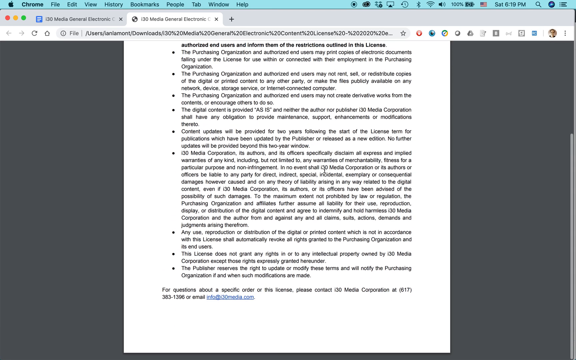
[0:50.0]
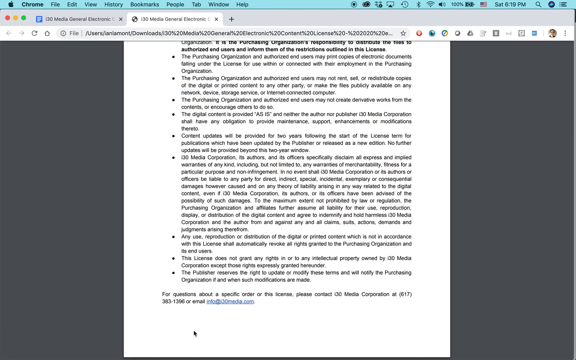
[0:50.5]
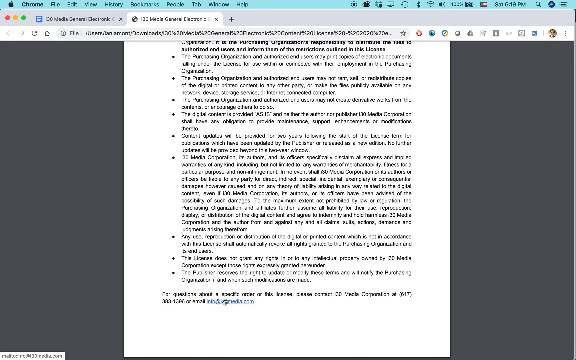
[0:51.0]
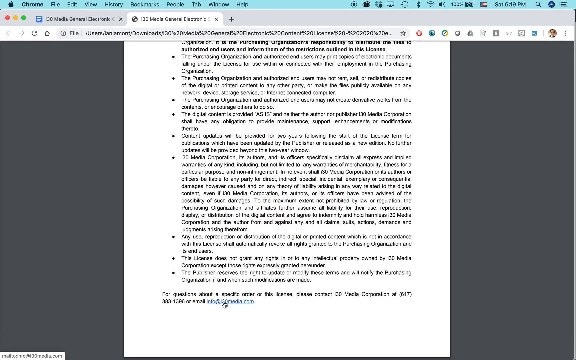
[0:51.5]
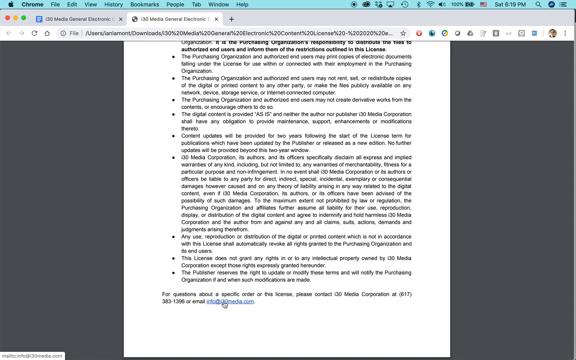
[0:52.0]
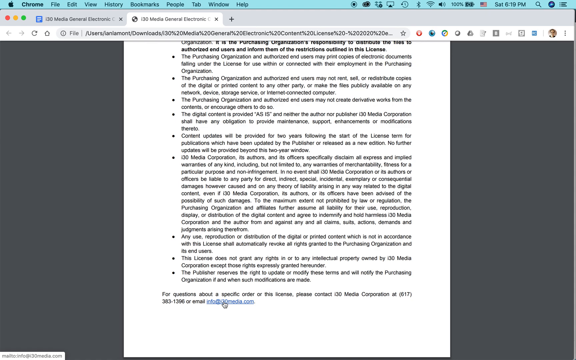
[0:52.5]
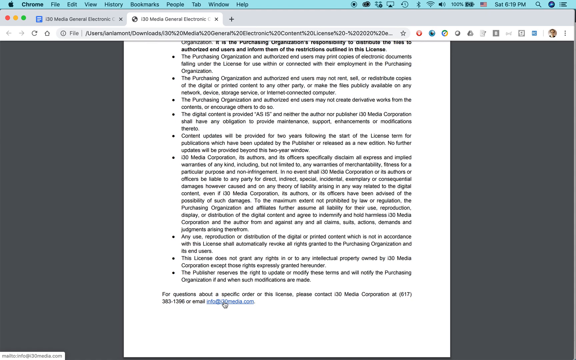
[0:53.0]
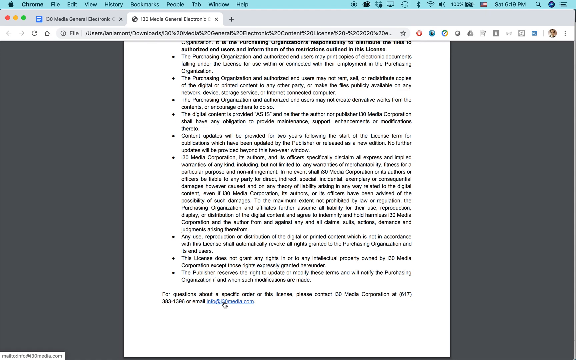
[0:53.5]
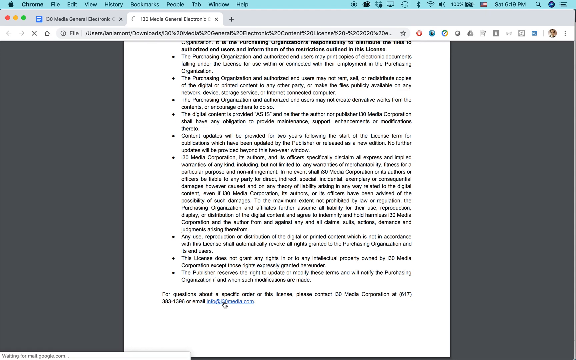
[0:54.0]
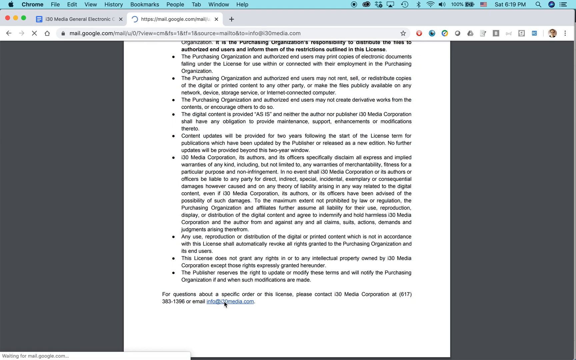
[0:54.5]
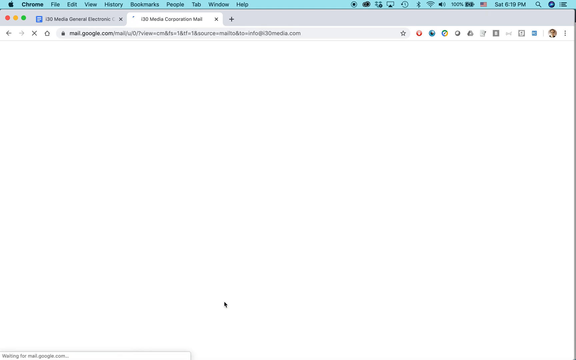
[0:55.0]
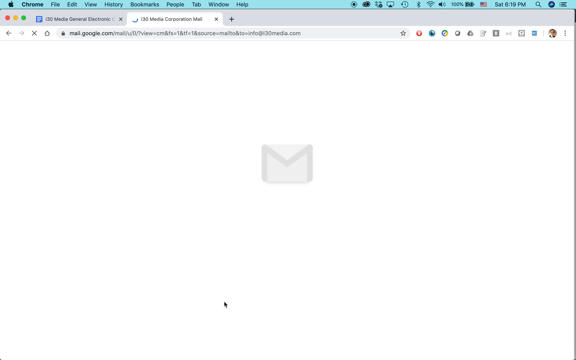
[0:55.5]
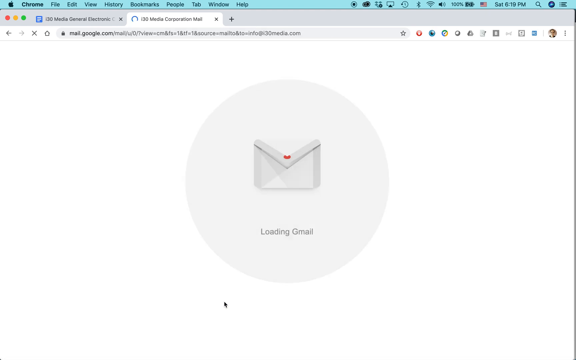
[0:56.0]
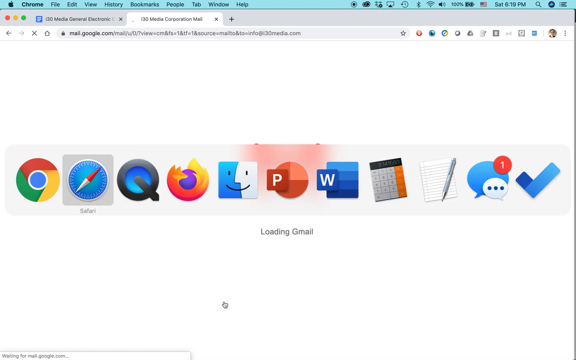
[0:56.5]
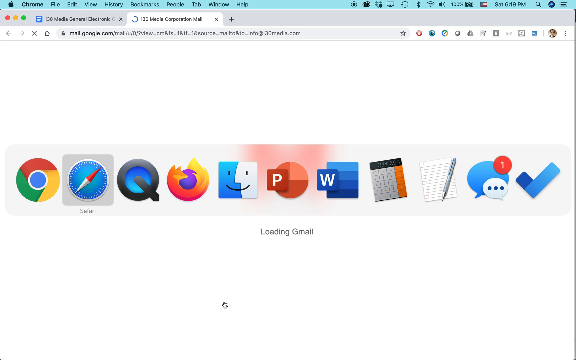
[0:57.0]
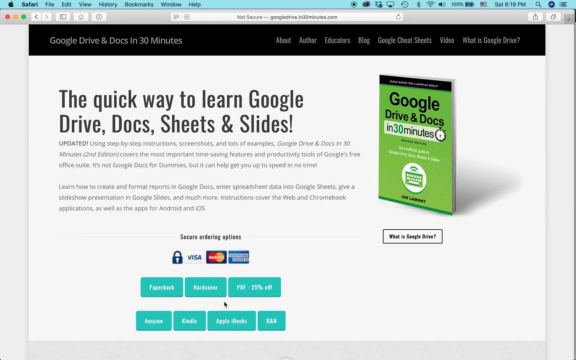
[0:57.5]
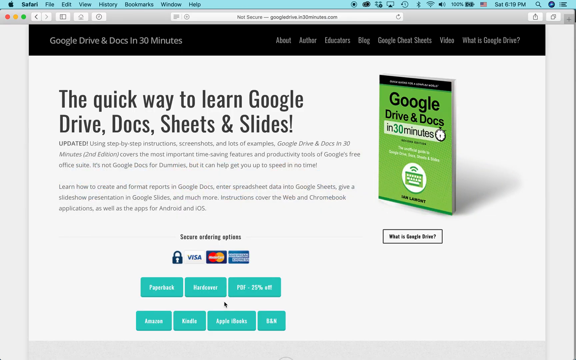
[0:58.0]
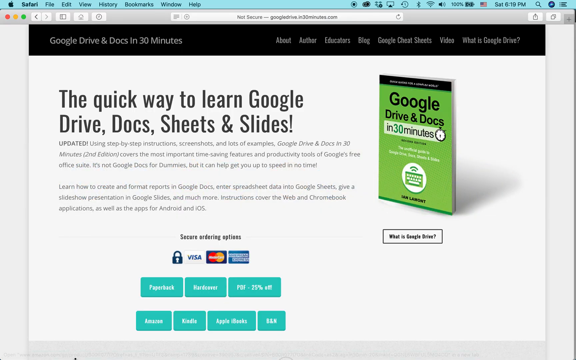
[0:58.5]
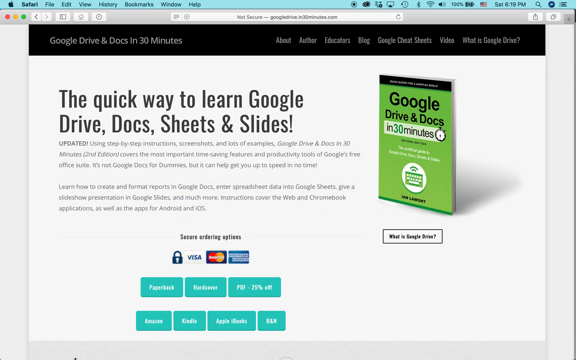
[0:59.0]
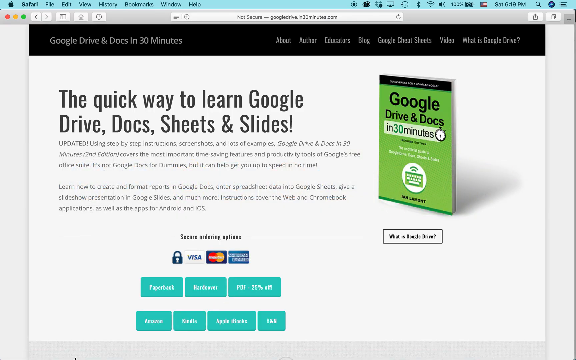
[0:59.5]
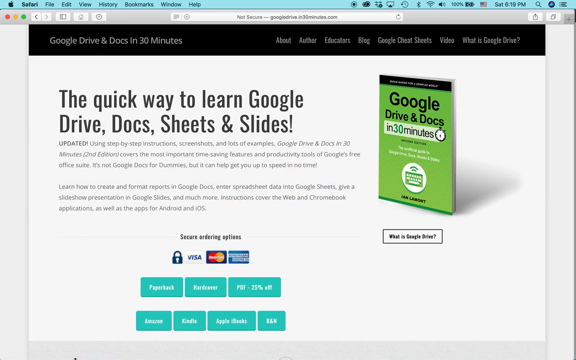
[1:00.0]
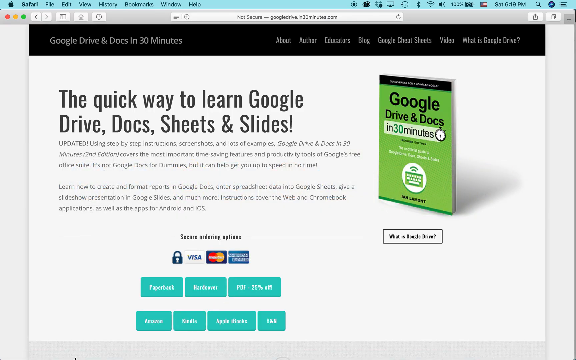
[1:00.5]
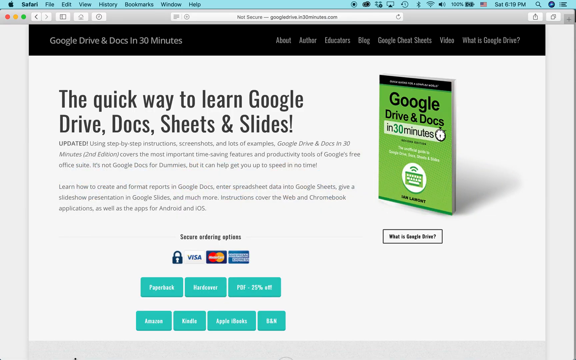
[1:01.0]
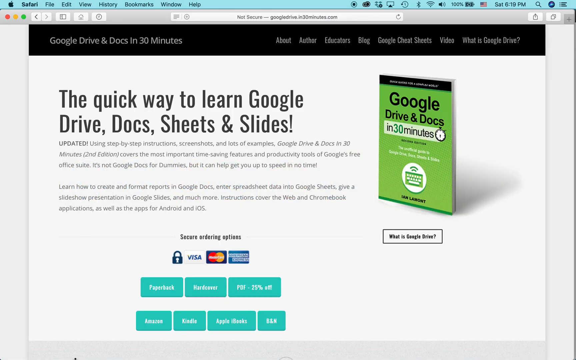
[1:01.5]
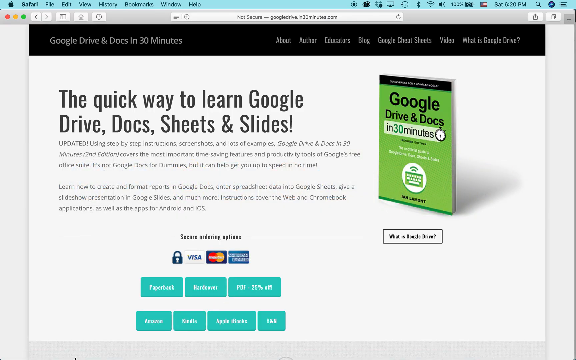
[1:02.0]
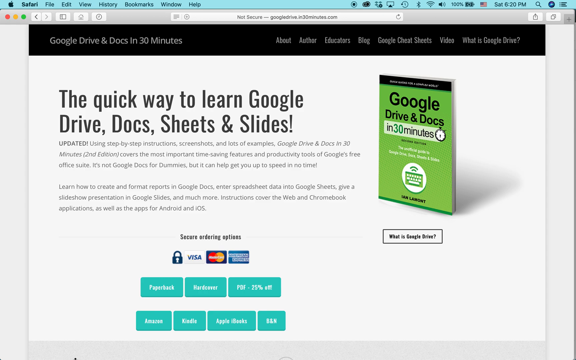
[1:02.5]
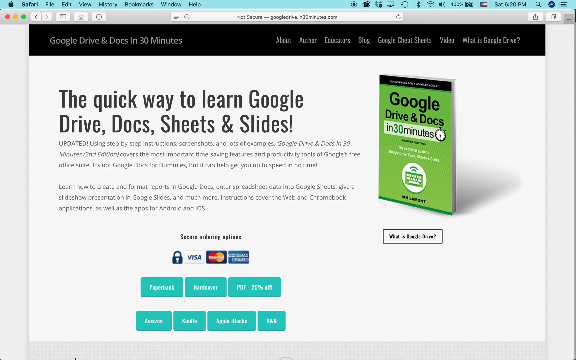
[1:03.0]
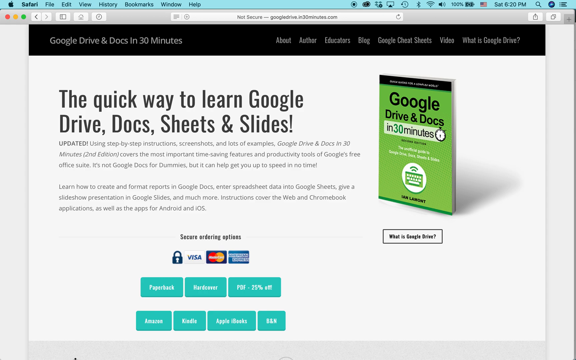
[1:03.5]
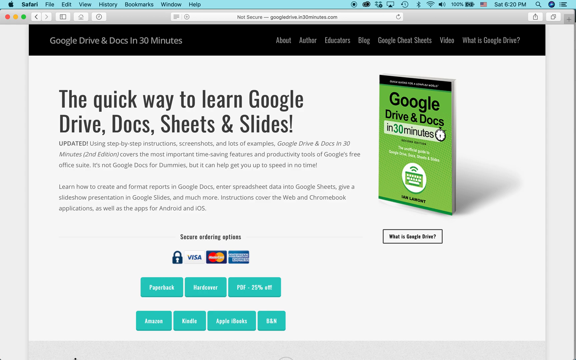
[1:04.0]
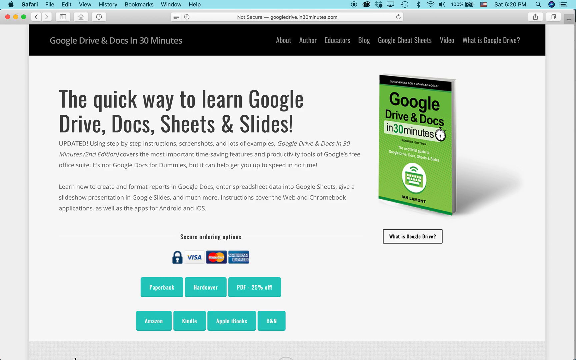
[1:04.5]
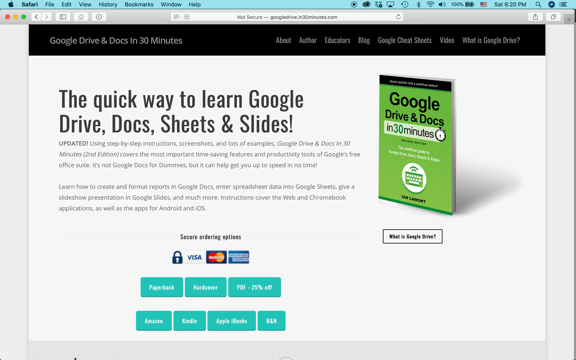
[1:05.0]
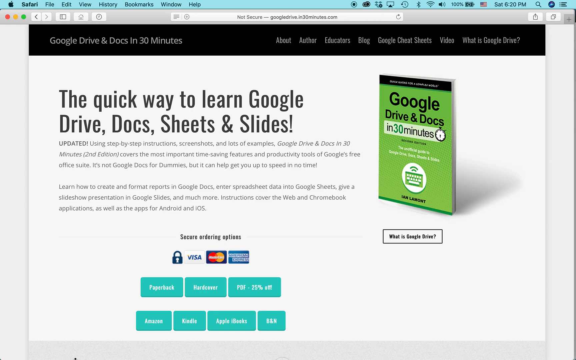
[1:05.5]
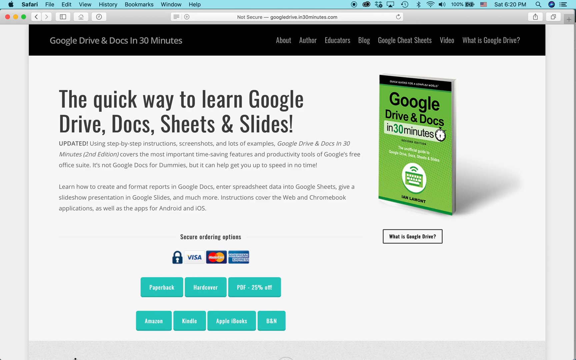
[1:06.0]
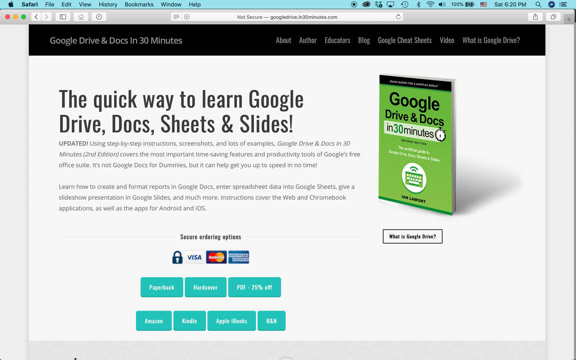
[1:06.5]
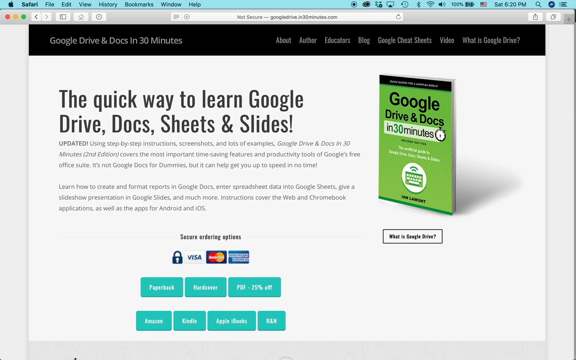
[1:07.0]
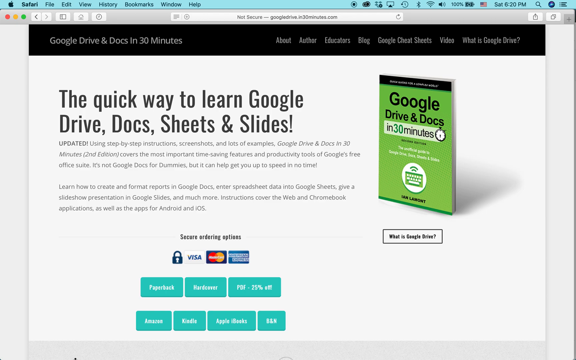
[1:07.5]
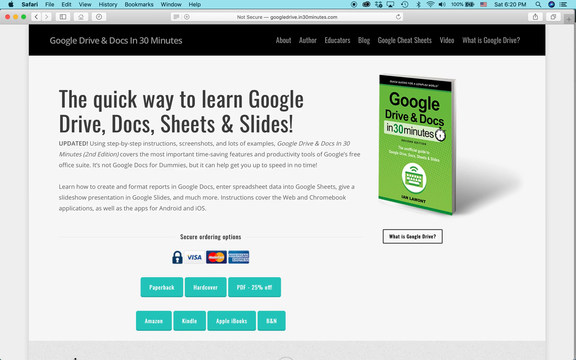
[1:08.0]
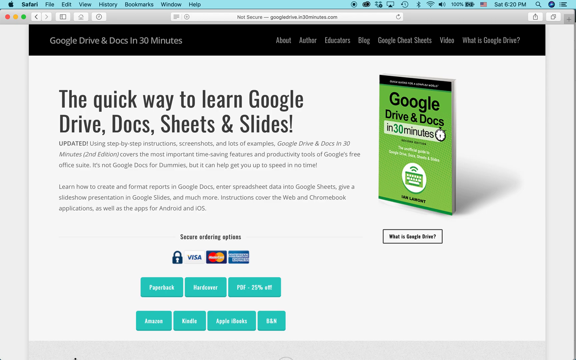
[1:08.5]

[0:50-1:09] The downloaded PDF document from the Google Docs page continues to be shown. The Gmail application then opens, and the view goes back to the page describing Google Drive and Document in 30 Minutes, a 30-minute informational course series on the quick way to learn Google Drive Docs, Sheets, and Slides, which serves as the outro screen. The setting does not change, staying within the tutorial-style screen and the Google Docs page inside the macOS web browser, where the PDF is also shown. The video ends on the screen with "quick way to learn google drive doc sheets and slides" visible. No people or animals appear.